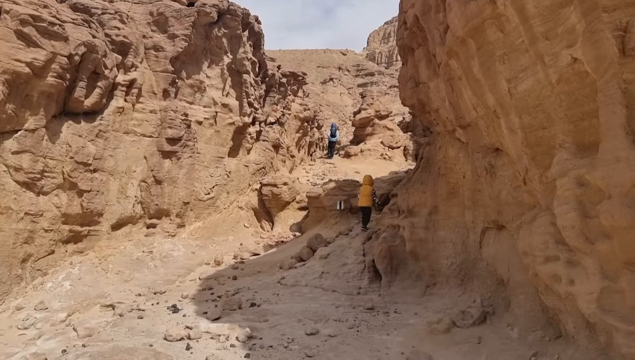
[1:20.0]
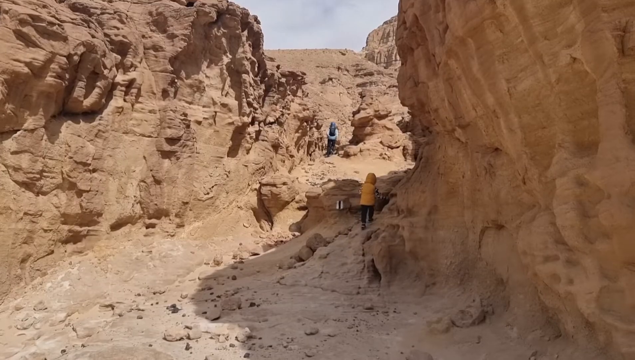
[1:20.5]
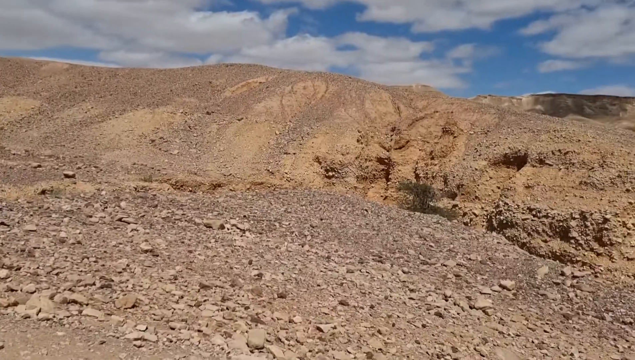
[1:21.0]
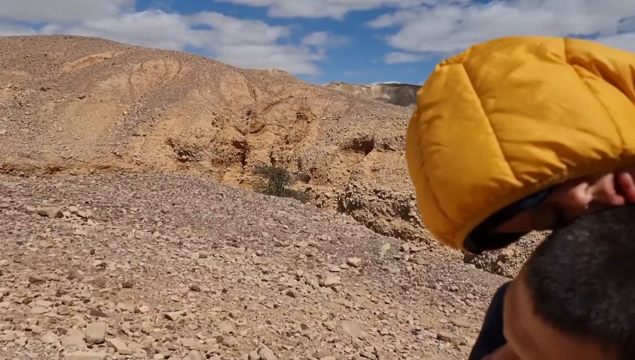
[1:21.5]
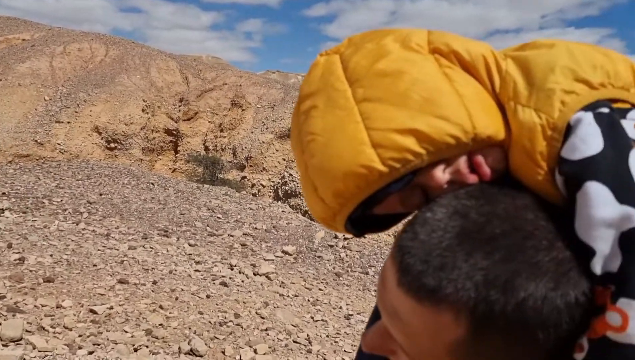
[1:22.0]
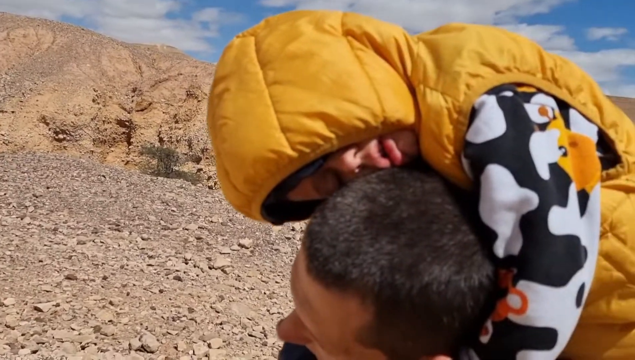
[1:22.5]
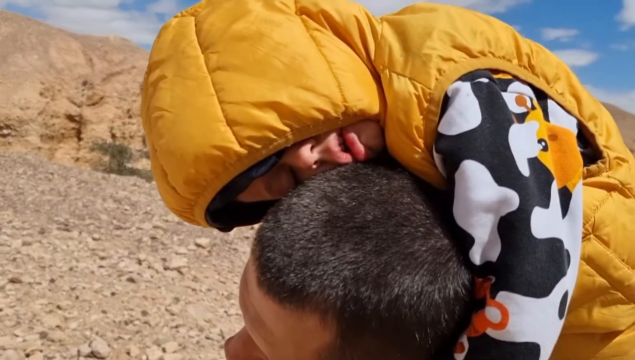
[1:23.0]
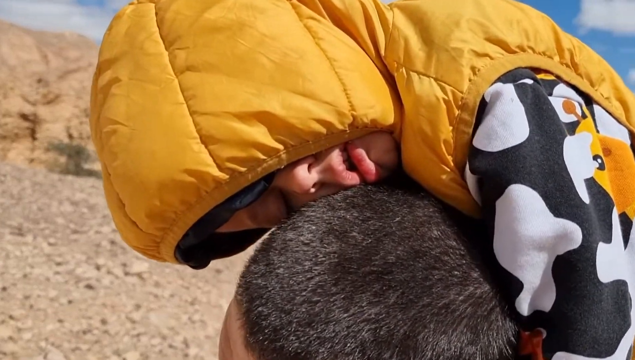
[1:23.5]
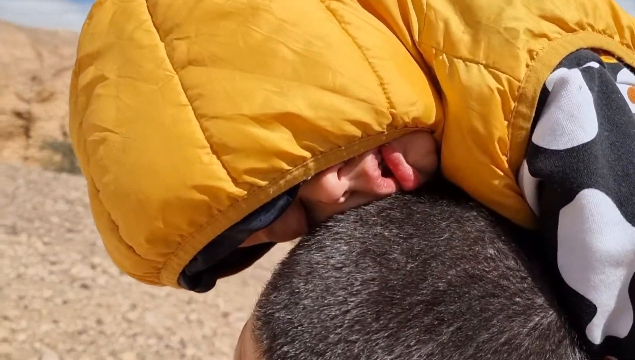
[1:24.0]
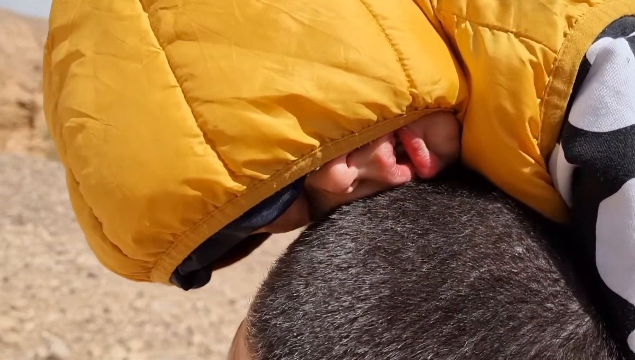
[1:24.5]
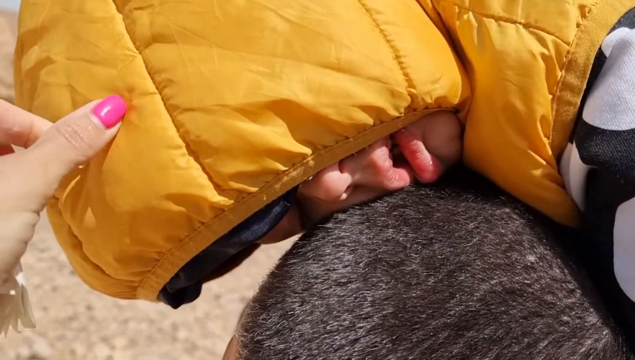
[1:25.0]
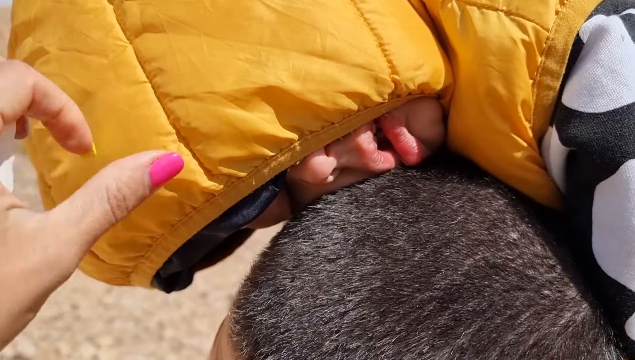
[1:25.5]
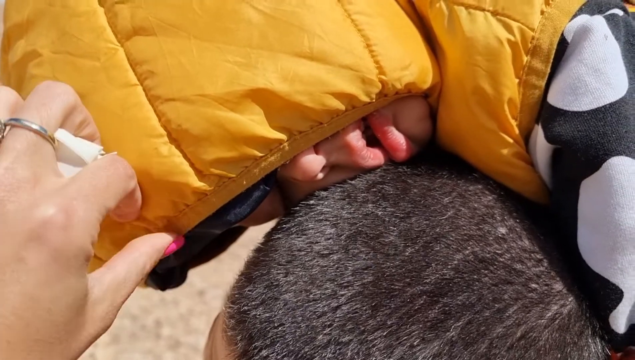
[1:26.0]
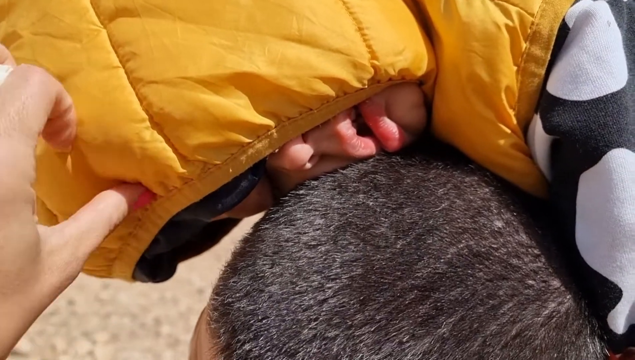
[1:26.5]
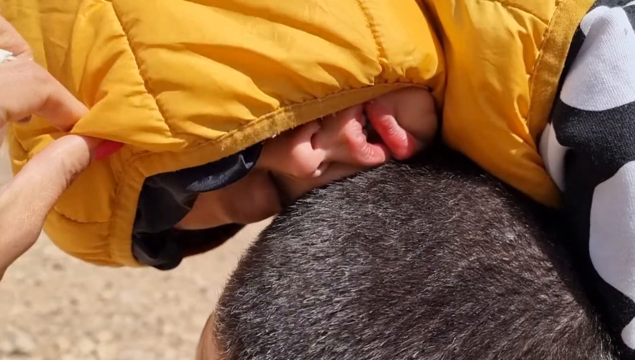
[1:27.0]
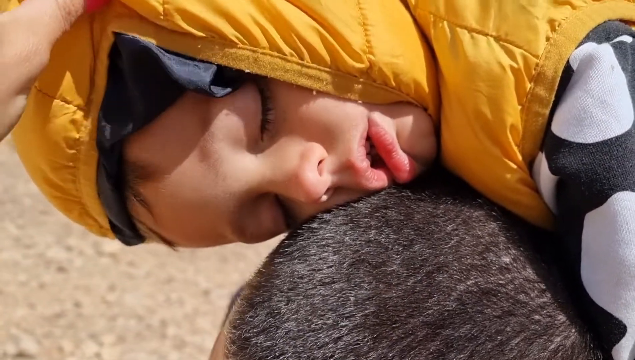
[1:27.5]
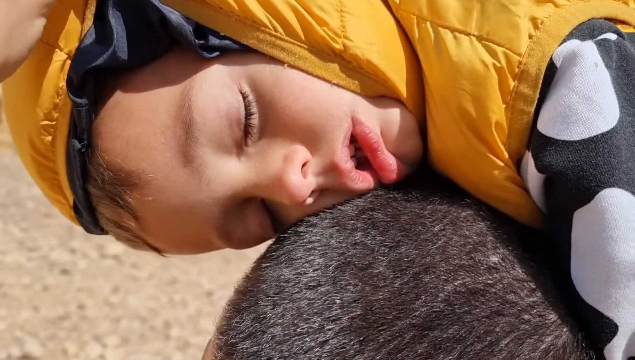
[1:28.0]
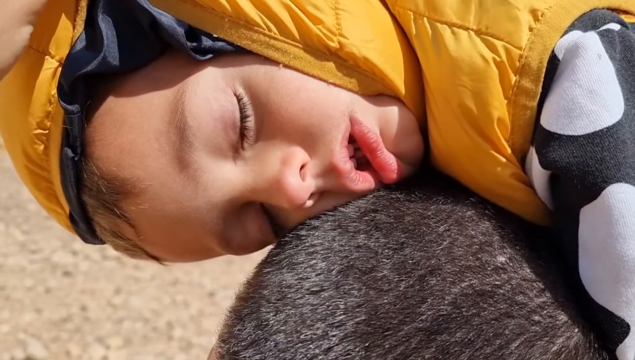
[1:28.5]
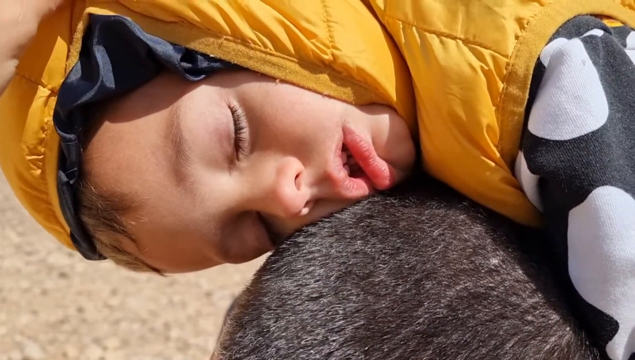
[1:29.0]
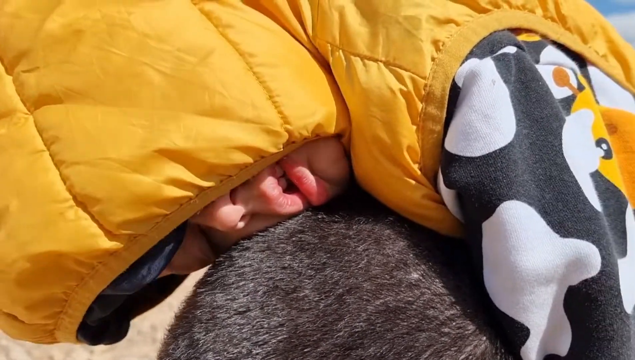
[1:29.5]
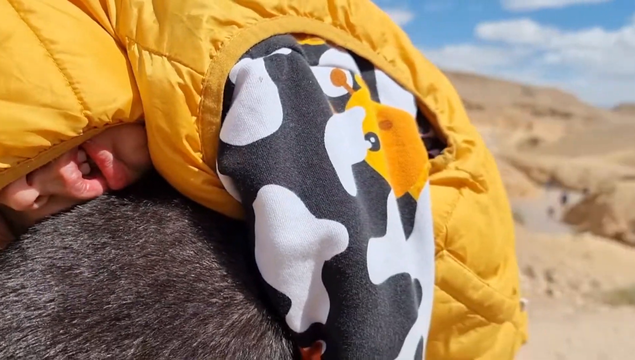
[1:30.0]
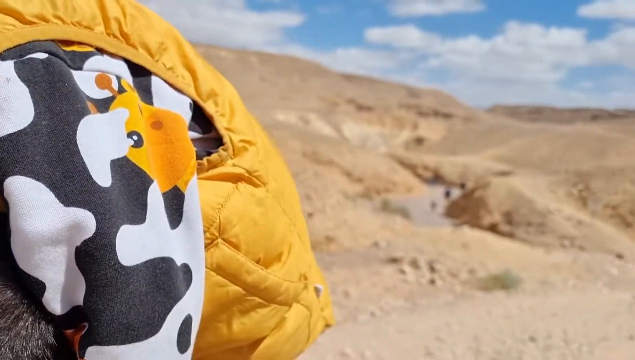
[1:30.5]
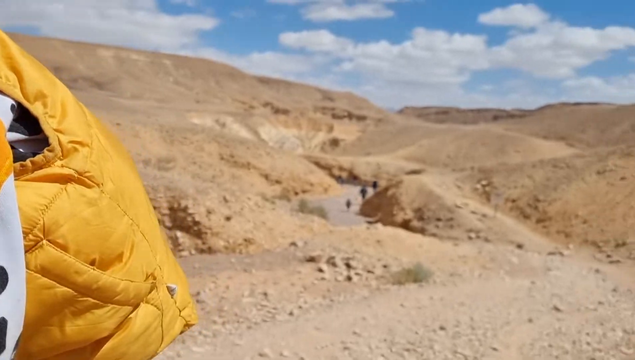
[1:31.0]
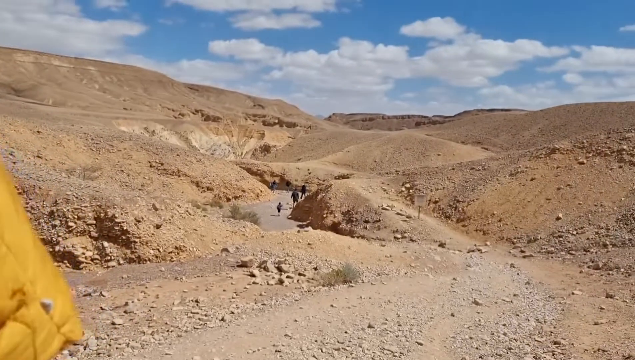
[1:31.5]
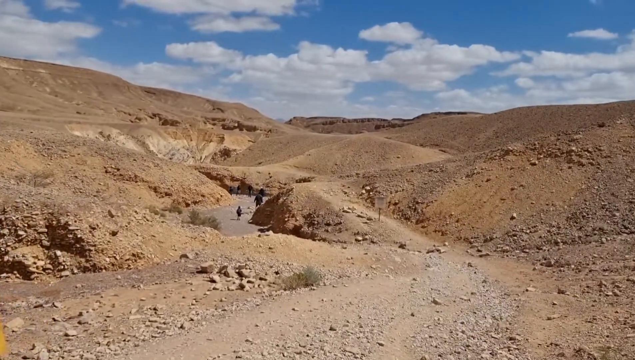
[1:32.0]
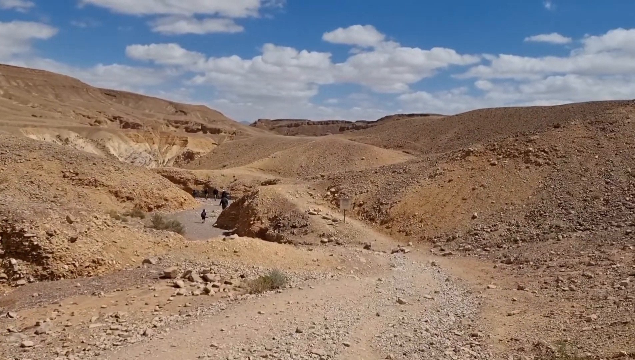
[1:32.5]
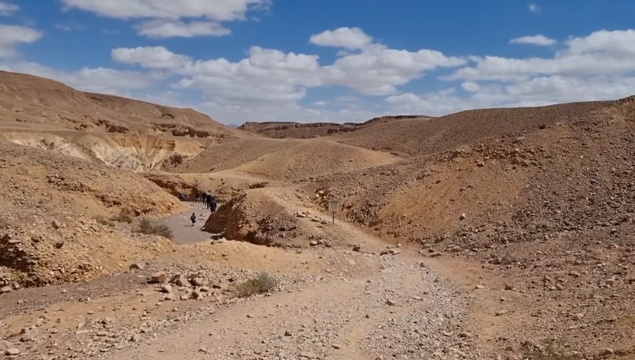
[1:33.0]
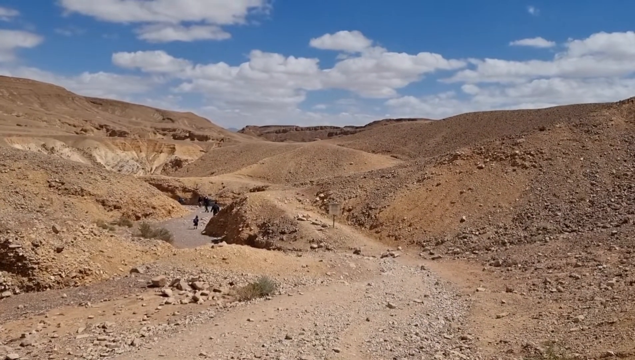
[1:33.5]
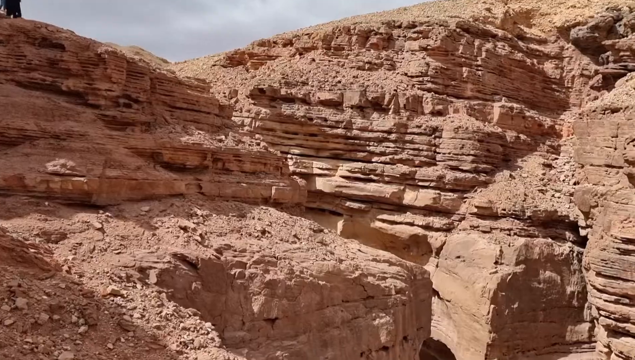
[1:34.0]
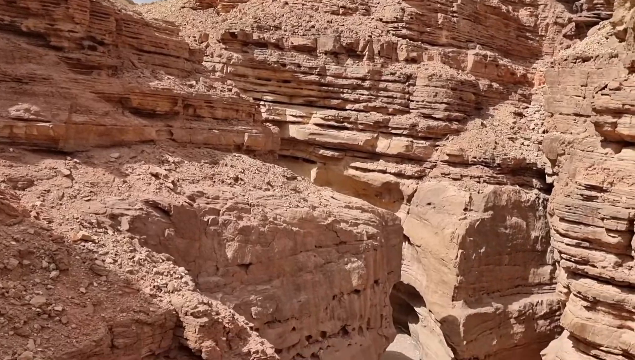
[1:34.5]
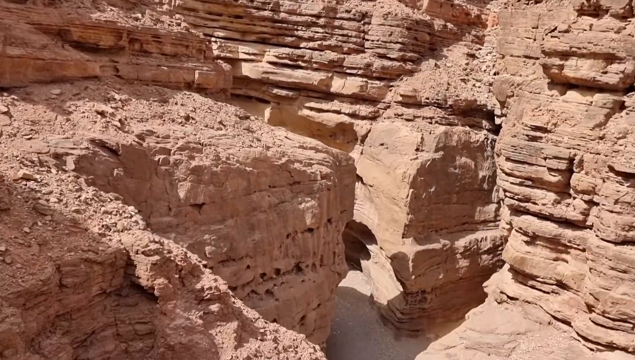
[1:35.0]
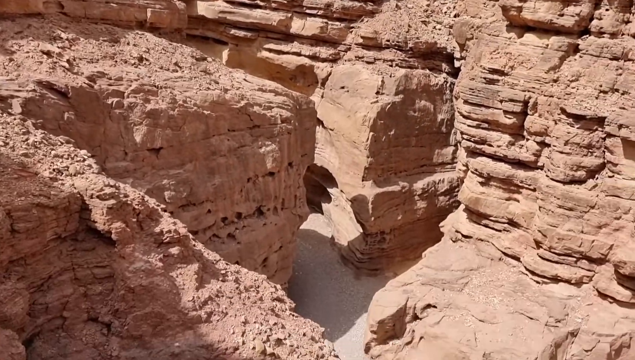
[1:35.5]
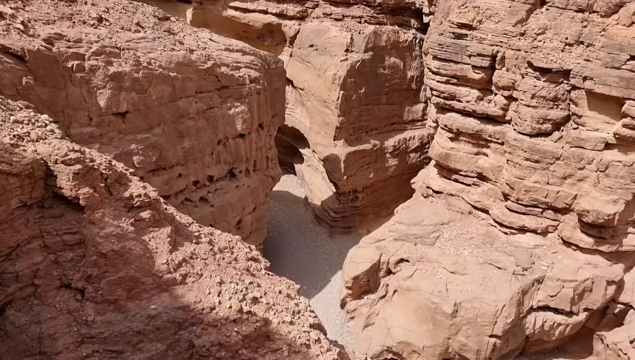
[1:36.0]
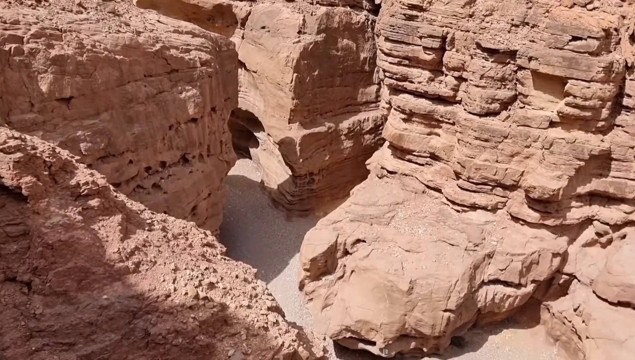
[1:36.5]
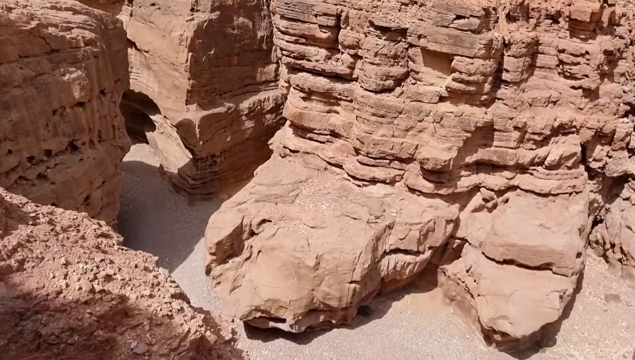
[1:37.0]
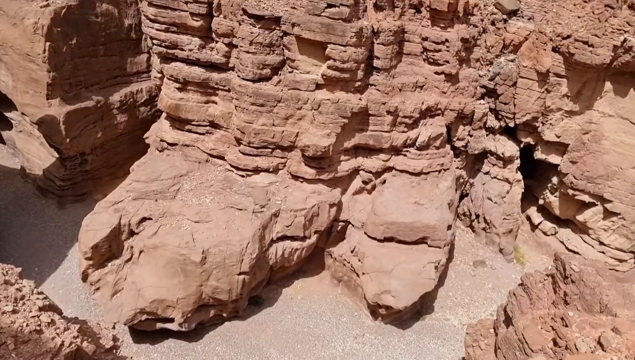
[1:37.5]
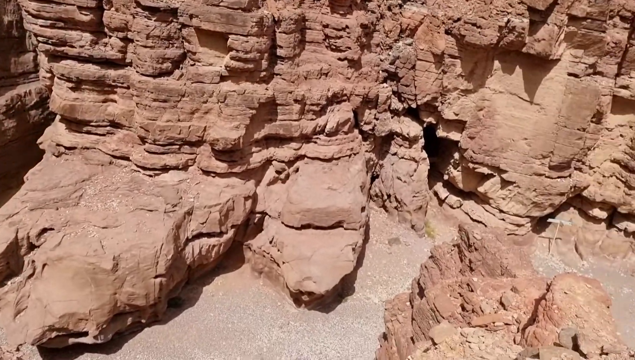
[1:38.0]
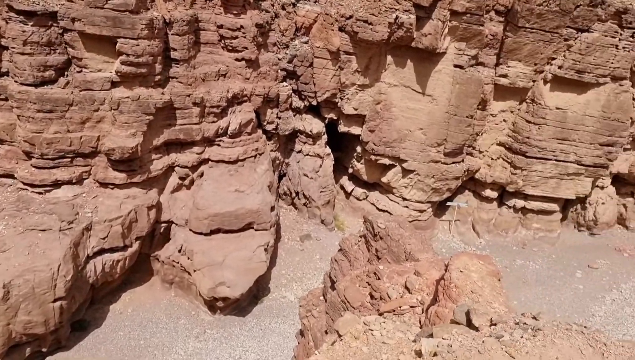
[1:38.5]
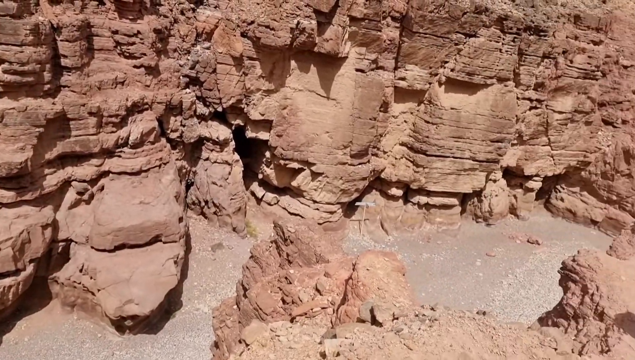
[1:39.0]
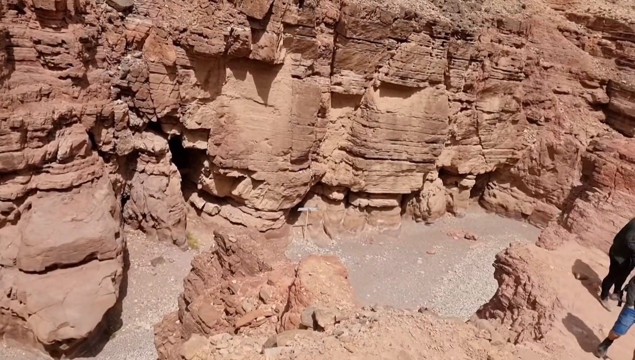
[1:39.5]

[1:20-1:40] Outdoors, a family visits what looks like a desert landscape. The parent filming looks at a child in a yellow hood who has fallen asleep, after the kids had been running around and playing. The rock structures are multiple stories tall, very smooth-looking and wavy, red and orange. The ground has many rocks and pebbles. Stairs and hand railings are built into the rocks for people who want to explore and climb, as this family is doing. The sky is very blue, contrasting with the orange and brown rocks, with a few somewhat puffy white clouds.